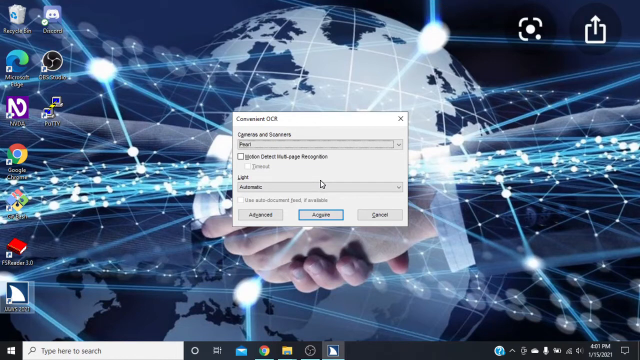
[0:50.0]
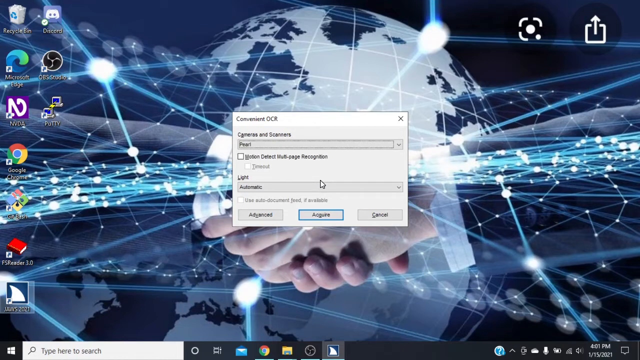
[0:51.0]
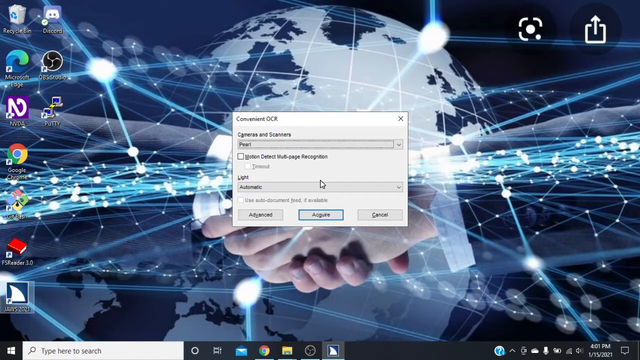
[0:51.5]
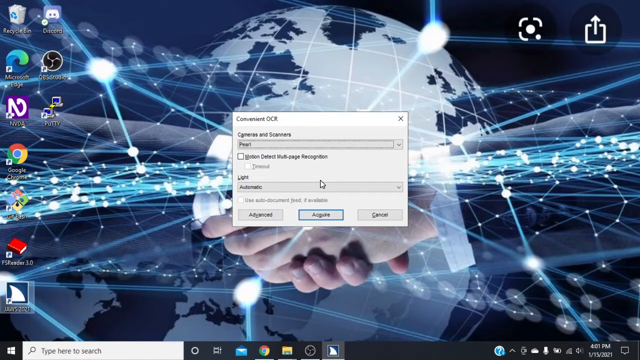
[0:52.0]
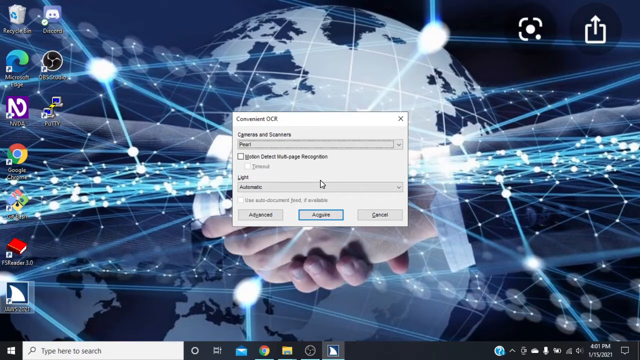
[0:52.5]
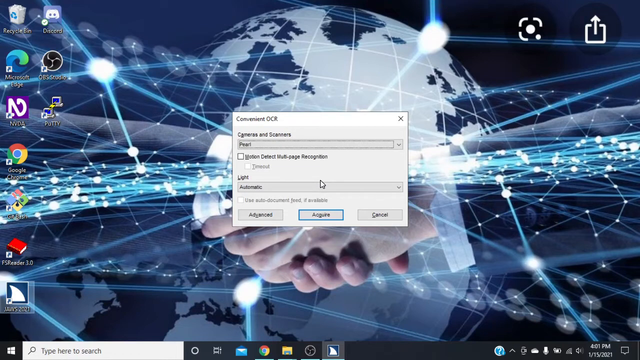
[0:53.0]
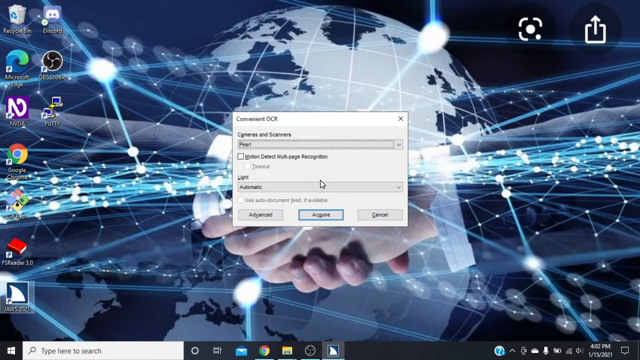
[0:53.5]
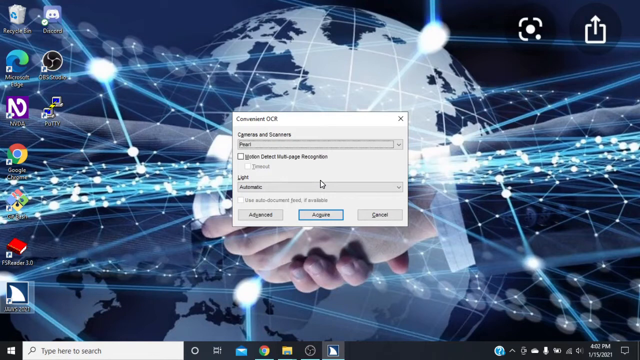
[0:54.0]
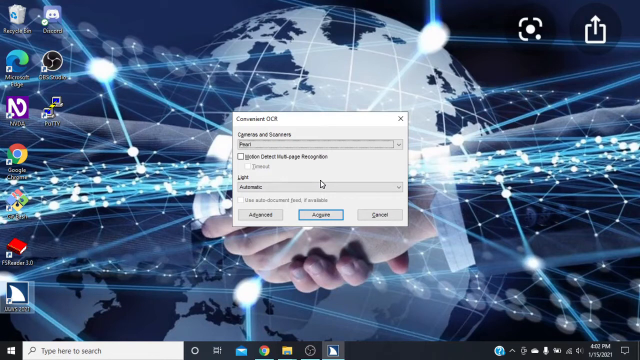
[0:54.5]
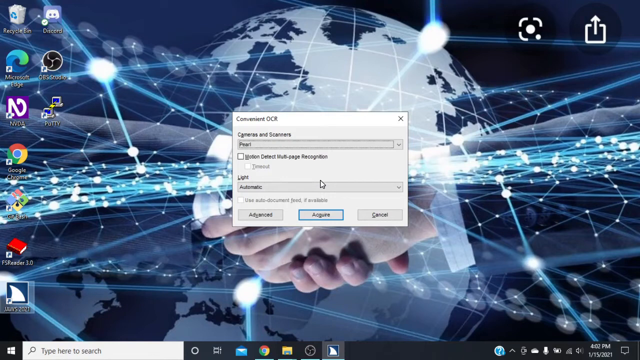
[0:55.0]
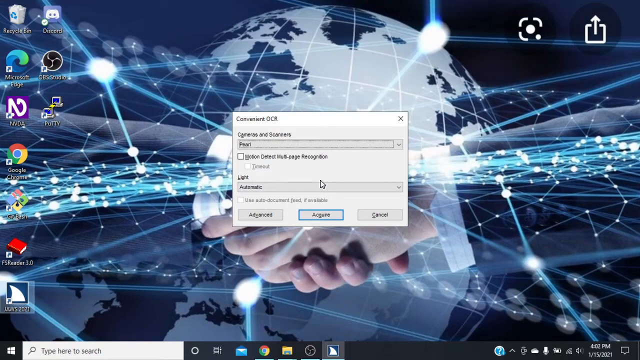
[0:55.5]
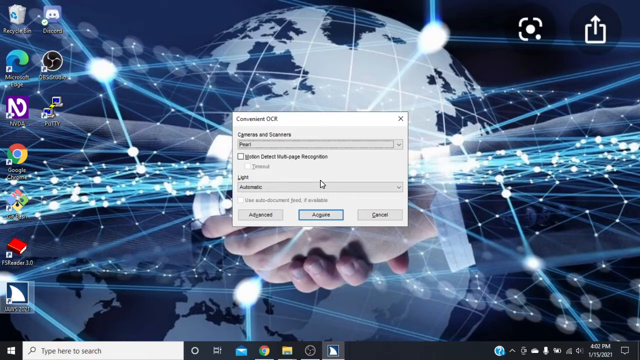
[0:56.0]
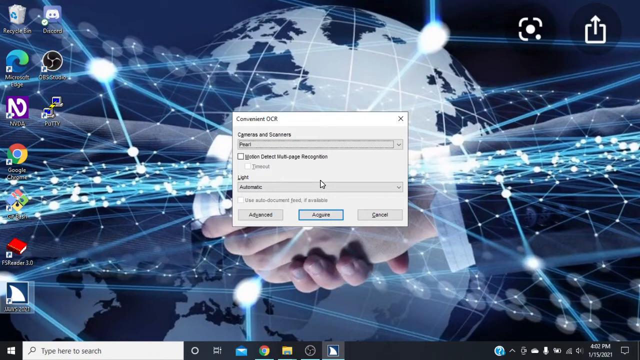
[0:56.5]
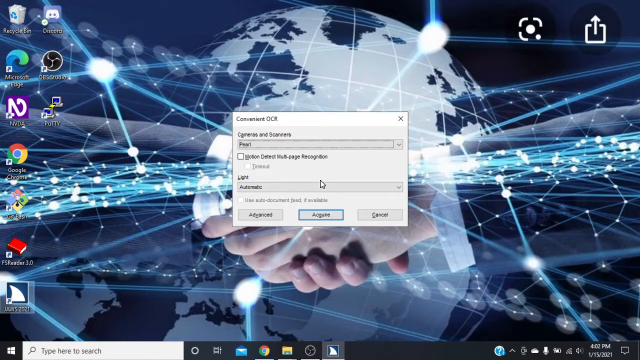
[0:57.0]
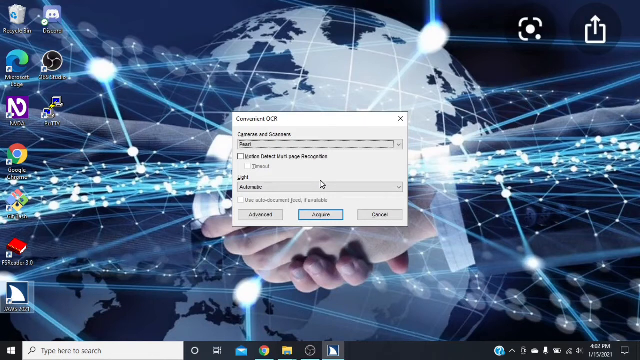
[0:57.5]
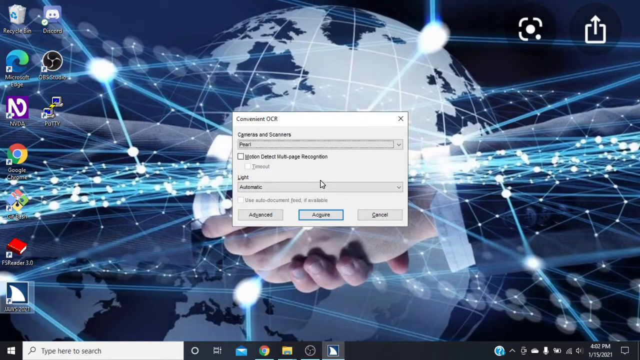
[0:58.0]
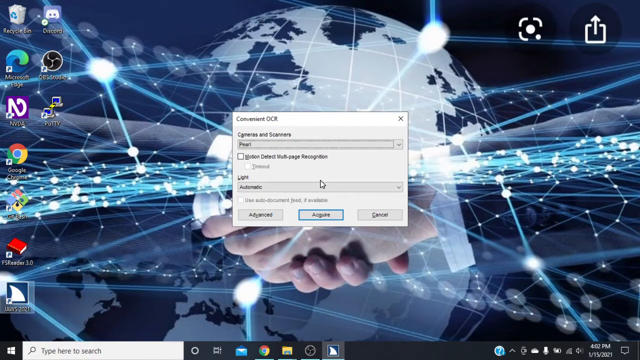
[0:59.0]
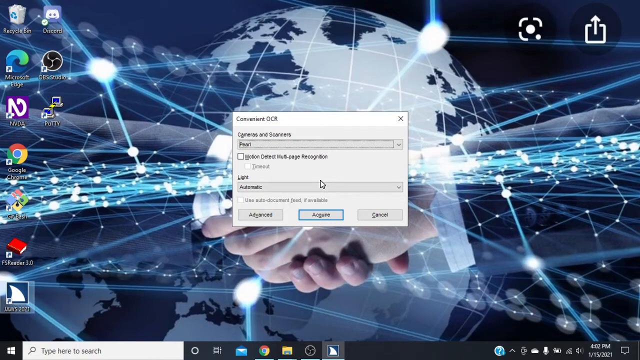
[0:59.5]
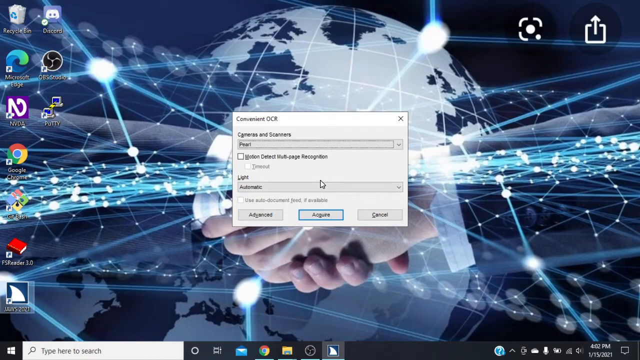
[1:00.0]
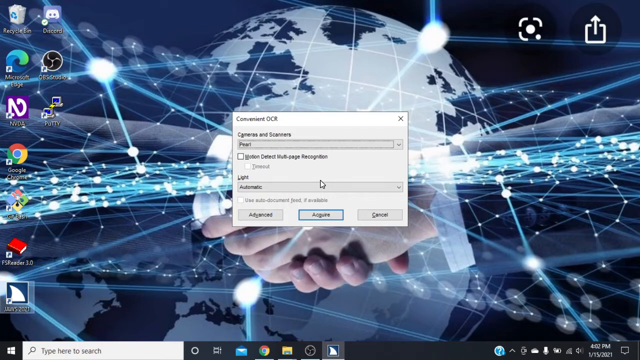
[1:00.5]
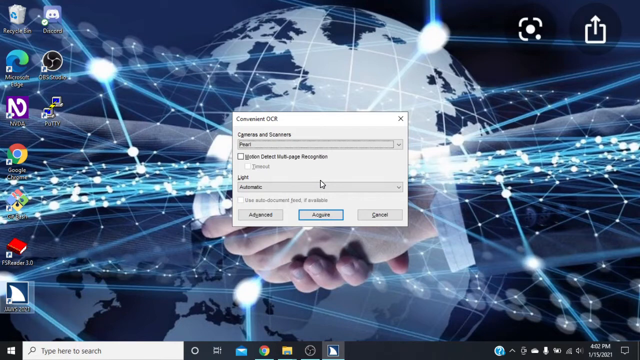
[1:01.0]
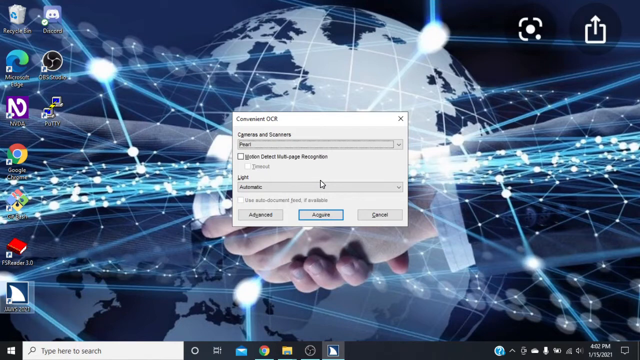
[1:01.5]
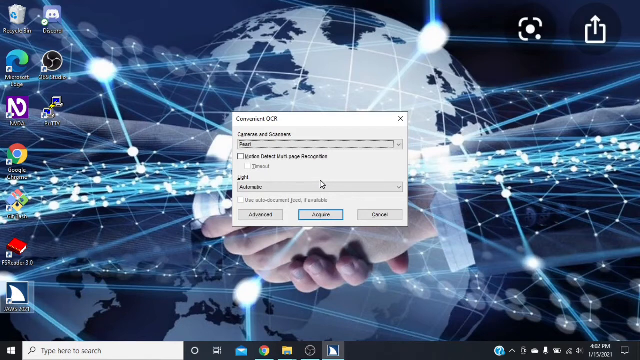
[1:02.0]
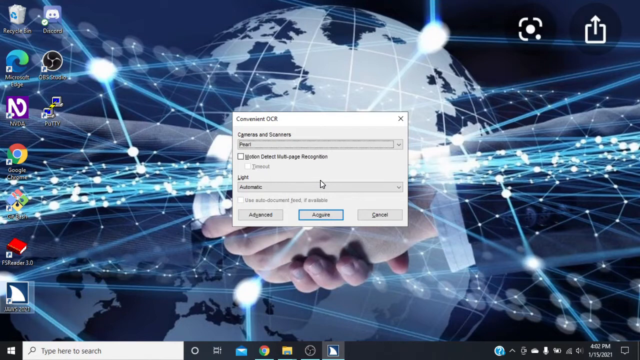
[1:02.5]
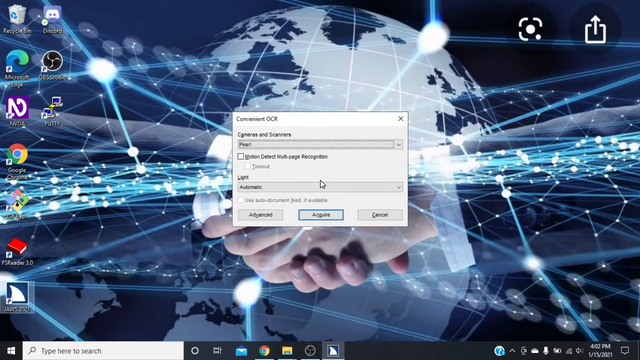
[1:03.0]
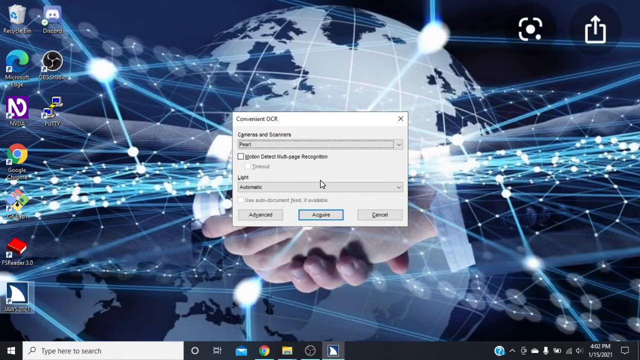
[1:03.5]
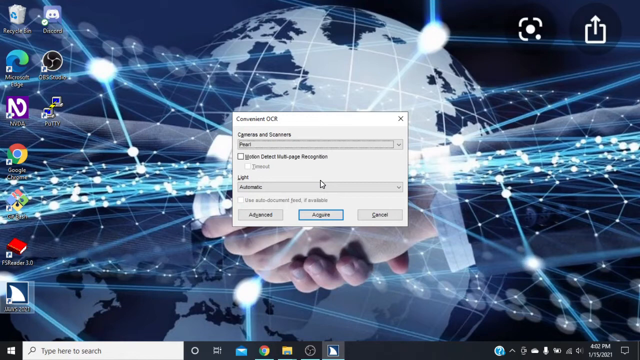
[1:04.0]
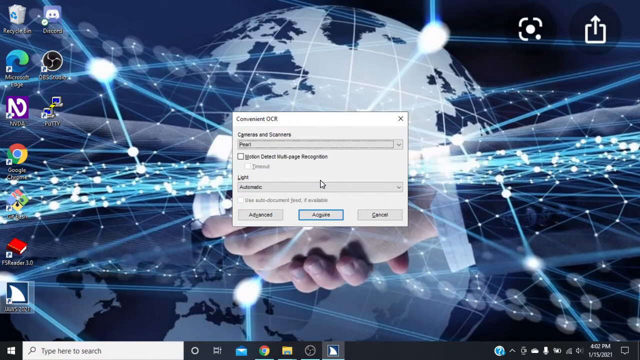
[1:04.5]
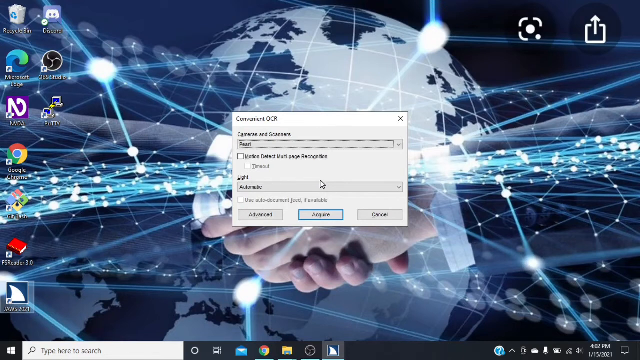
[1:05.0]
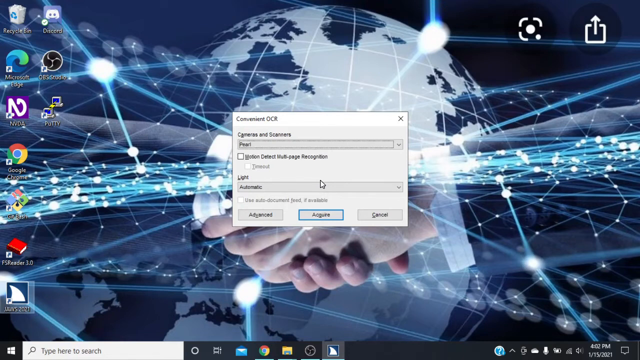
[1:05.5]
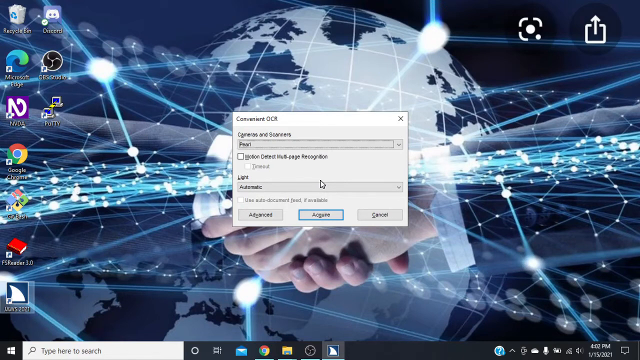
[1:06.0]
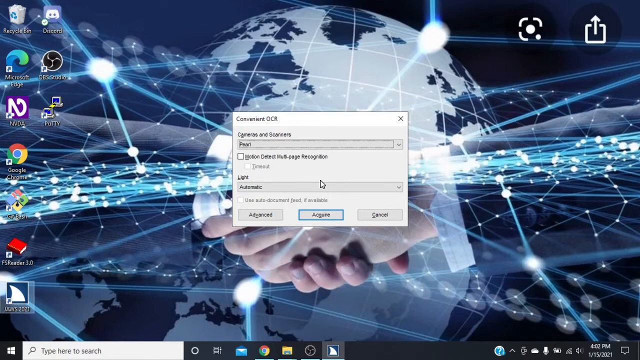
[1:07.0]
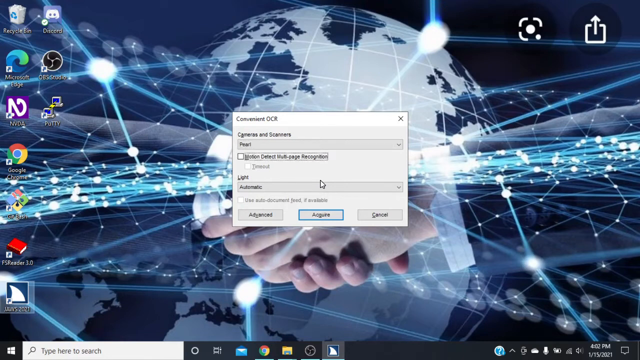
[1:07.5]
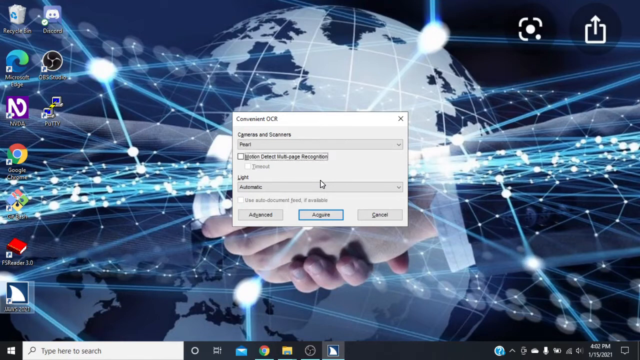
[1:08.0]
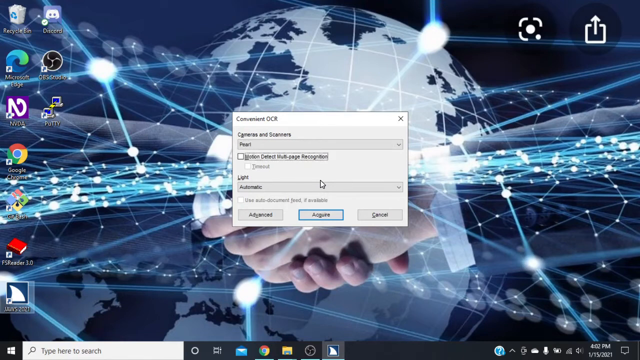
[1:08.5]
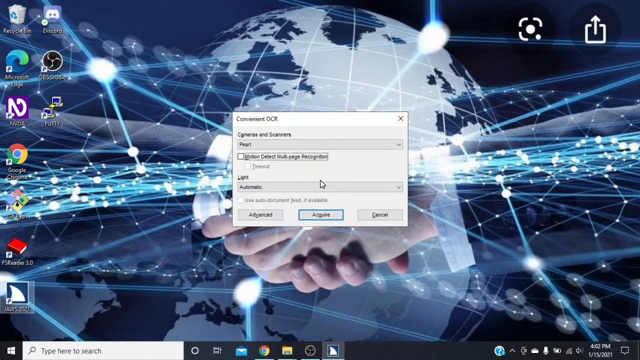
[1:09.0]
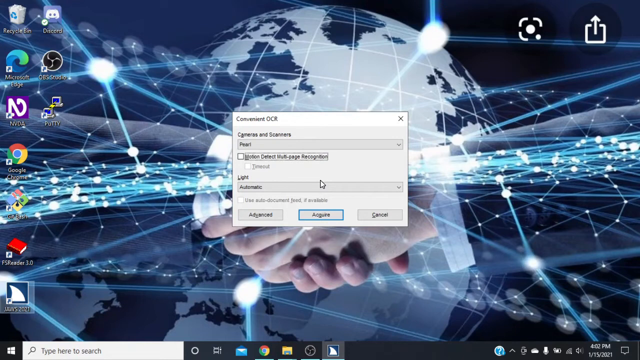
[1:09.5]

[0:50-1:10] The first radio button seems to say "Motion Defects Multi Page Recognition," though the text is hard to read due to the video quality. The middle radio button seems to say "Time Out," and the bottom one says "Used Auto Document Feed if Available." The top radio button is highlighted with a thin black rectangle, which then disappears. The mouse cursor stays in the same spot. The bottom-left button says "Advanced" and the bottom-right one says "Cancelable"; the middle one seems to say "Acquire," but it is not really legible due to the resolution of the screen recording. The time at the bottom of the screen now reads 4:02 pm.